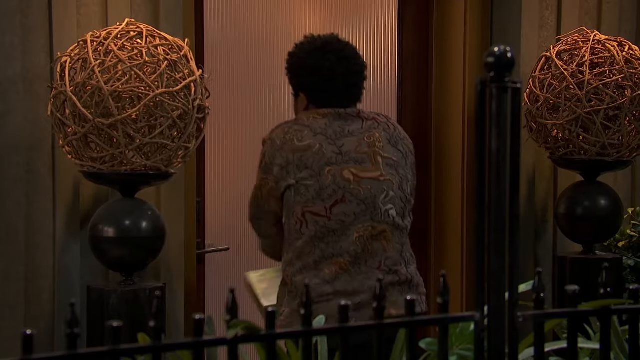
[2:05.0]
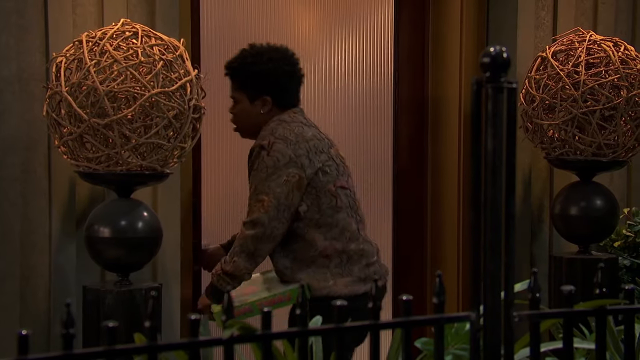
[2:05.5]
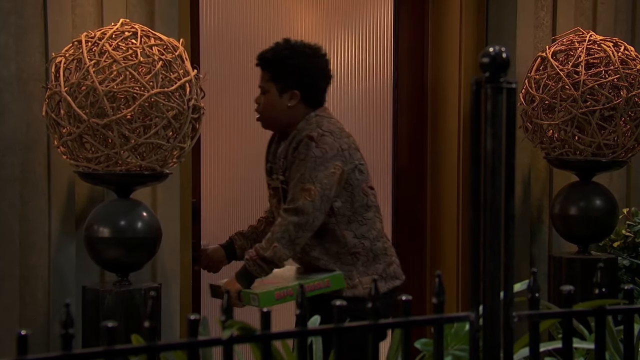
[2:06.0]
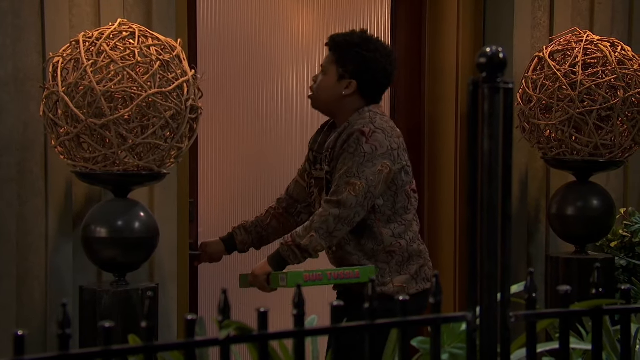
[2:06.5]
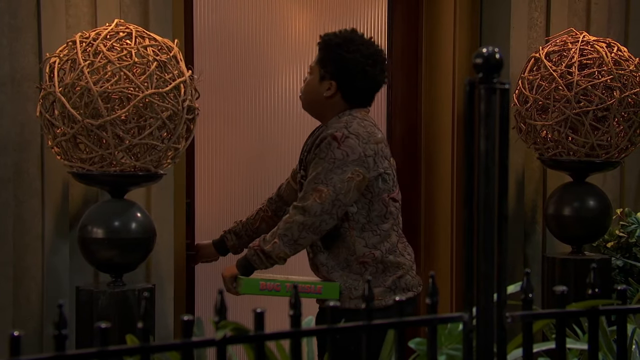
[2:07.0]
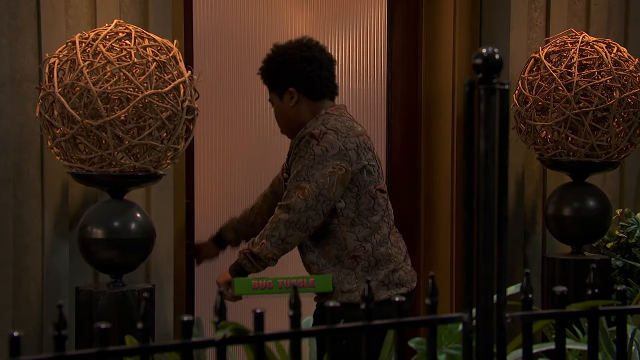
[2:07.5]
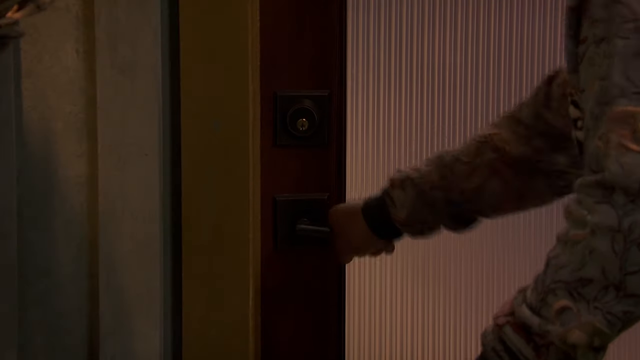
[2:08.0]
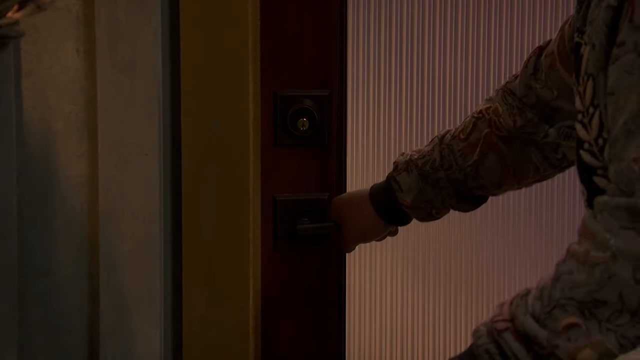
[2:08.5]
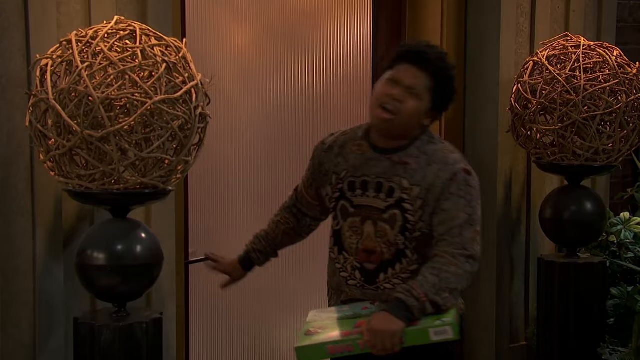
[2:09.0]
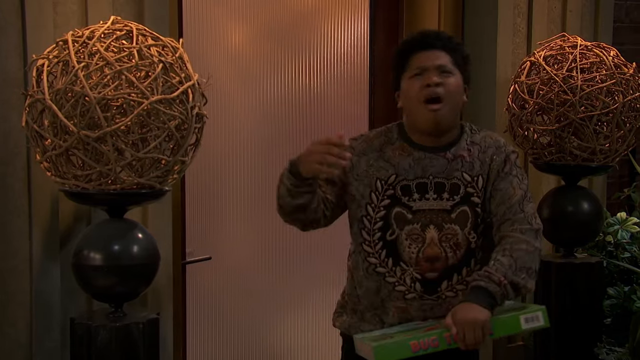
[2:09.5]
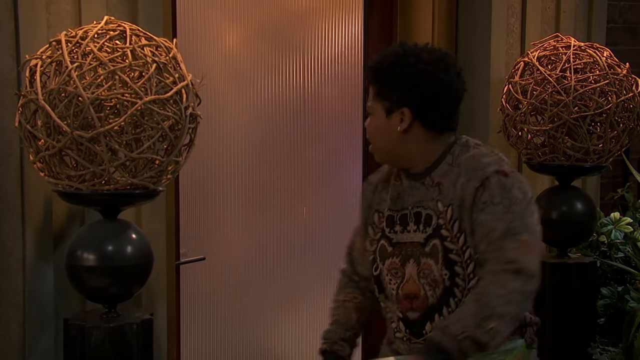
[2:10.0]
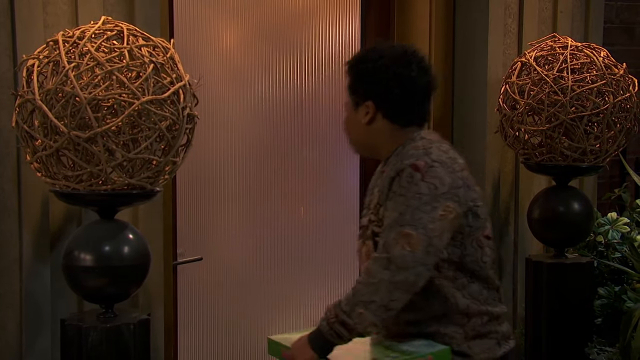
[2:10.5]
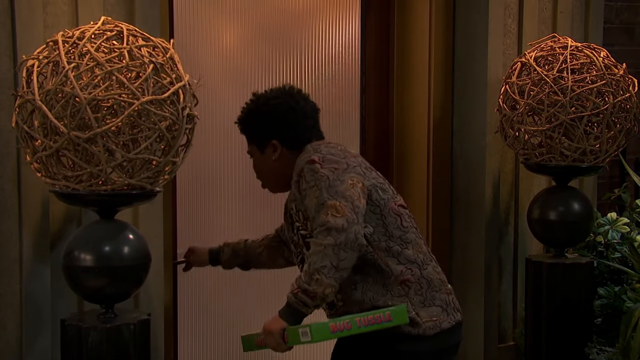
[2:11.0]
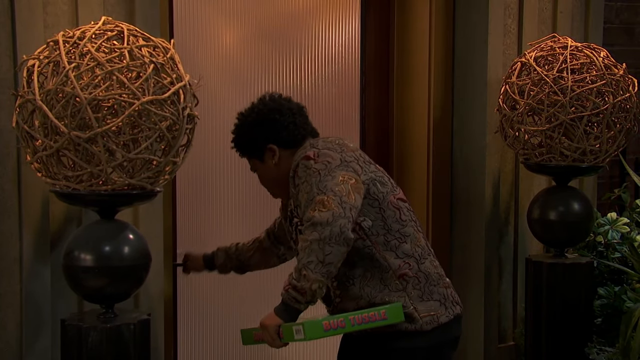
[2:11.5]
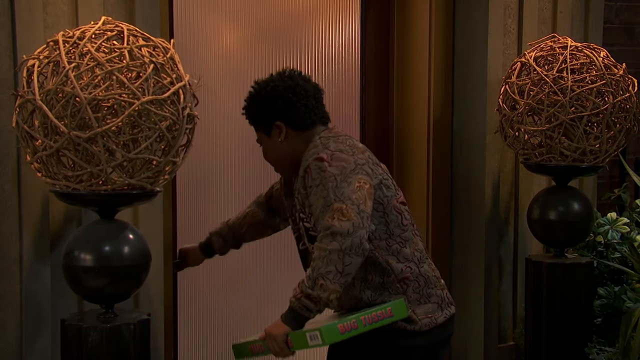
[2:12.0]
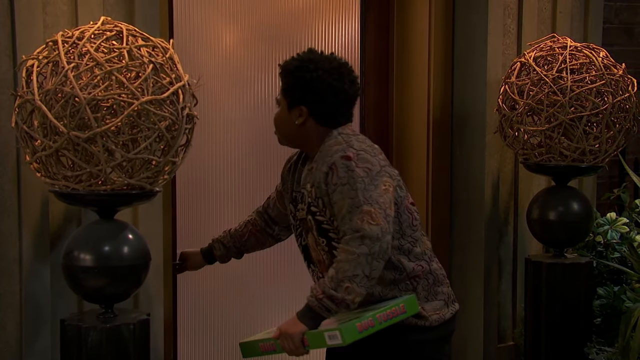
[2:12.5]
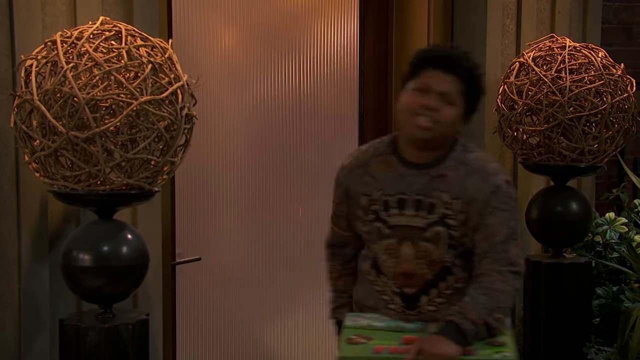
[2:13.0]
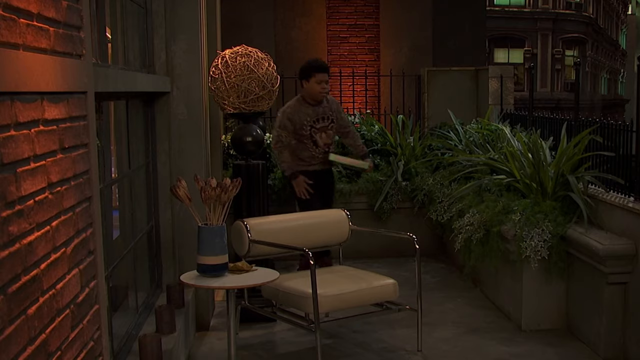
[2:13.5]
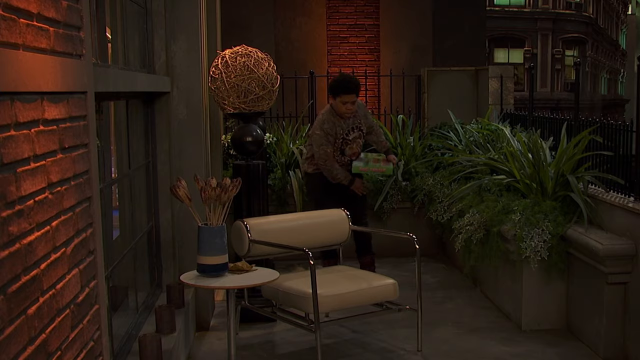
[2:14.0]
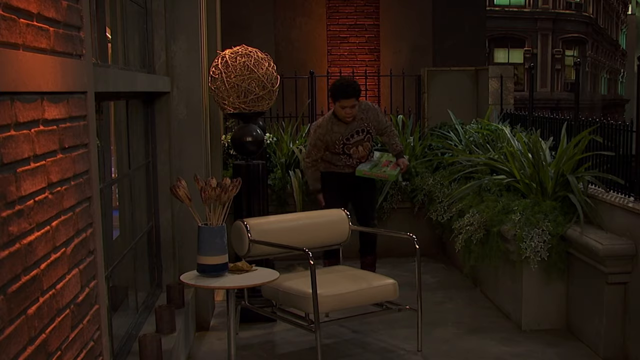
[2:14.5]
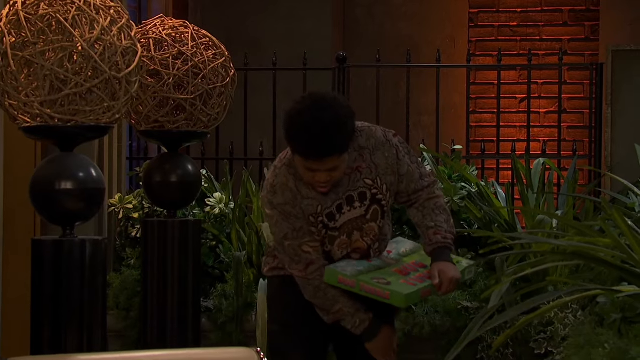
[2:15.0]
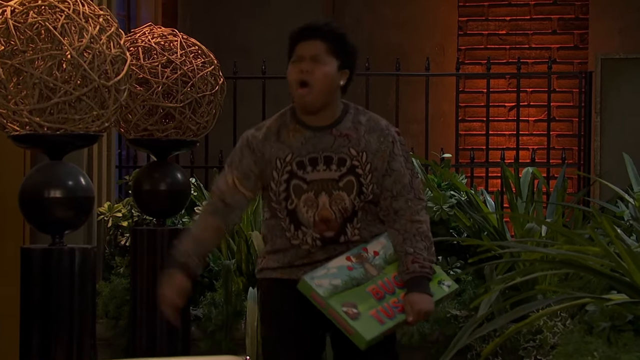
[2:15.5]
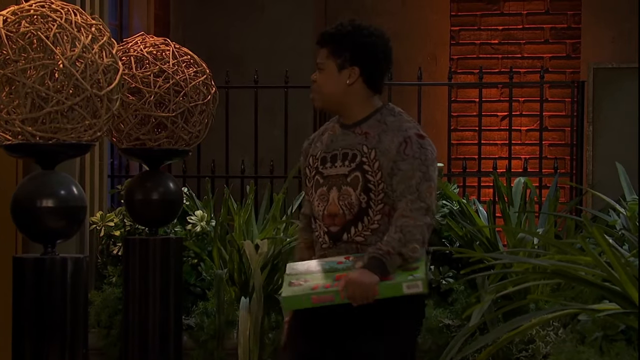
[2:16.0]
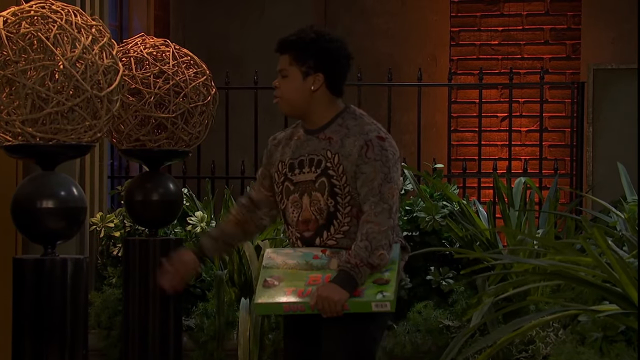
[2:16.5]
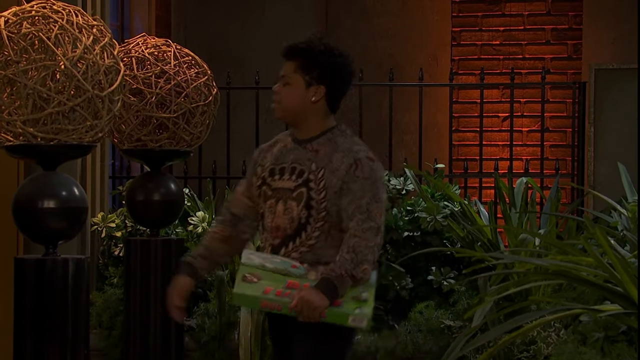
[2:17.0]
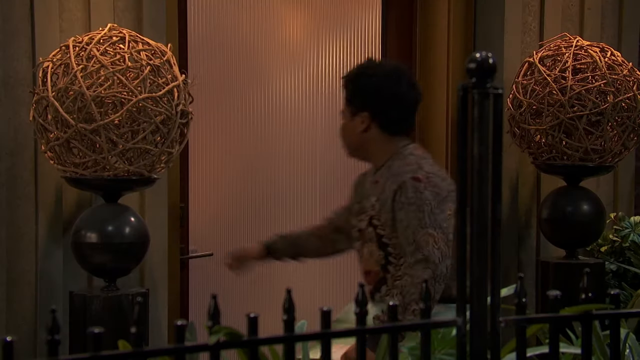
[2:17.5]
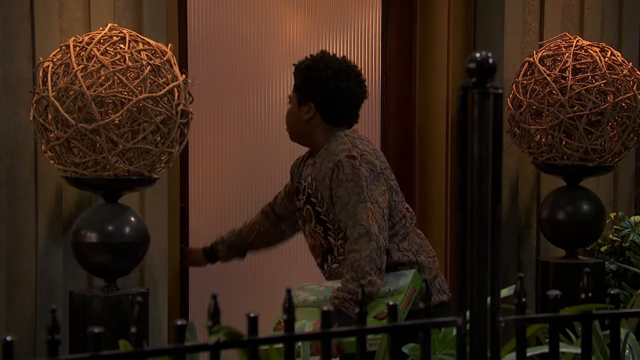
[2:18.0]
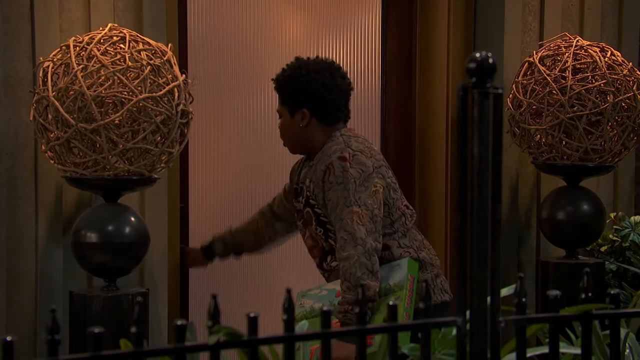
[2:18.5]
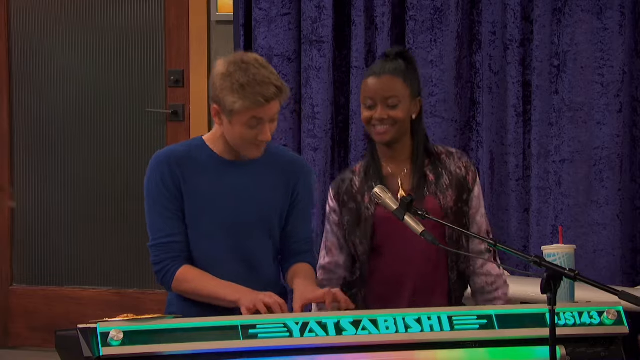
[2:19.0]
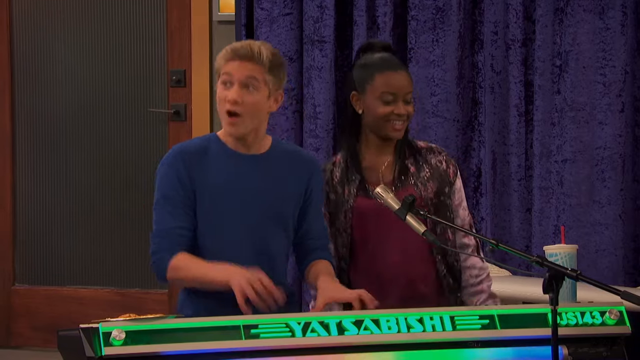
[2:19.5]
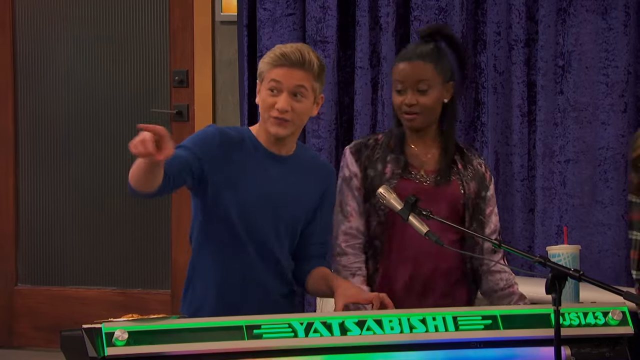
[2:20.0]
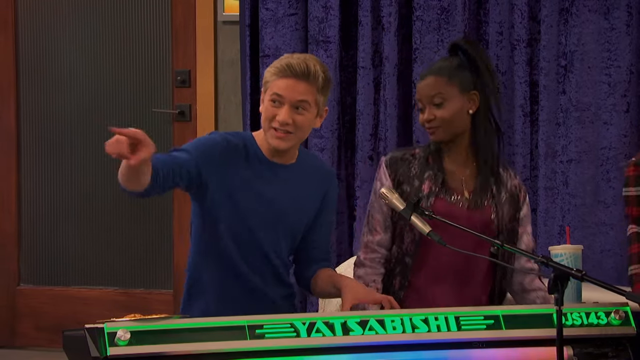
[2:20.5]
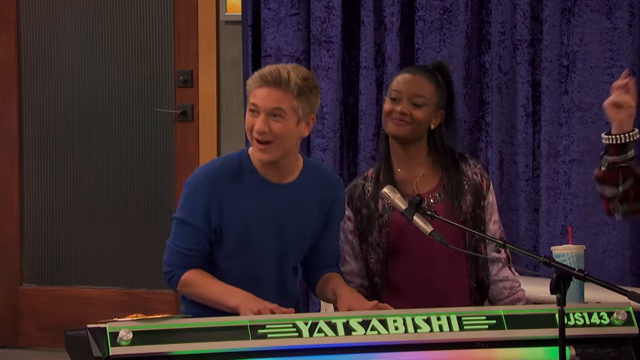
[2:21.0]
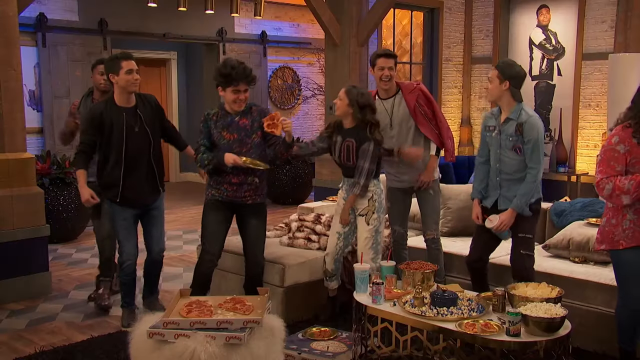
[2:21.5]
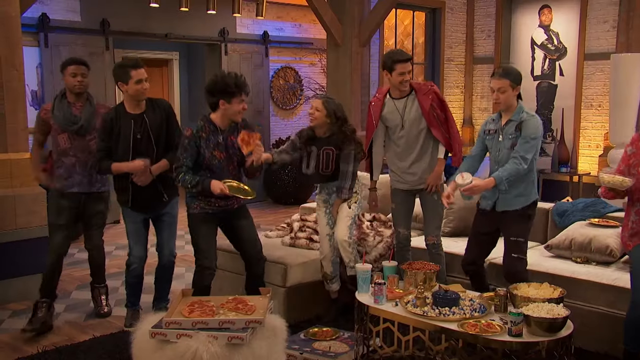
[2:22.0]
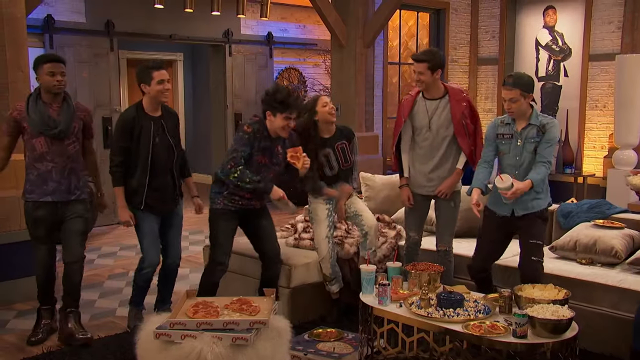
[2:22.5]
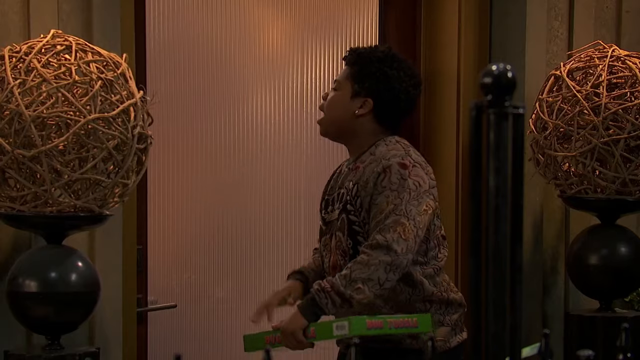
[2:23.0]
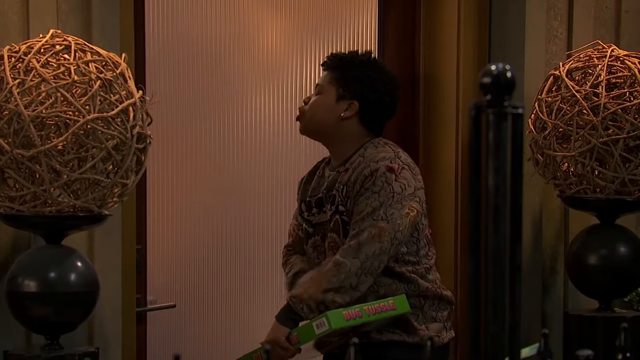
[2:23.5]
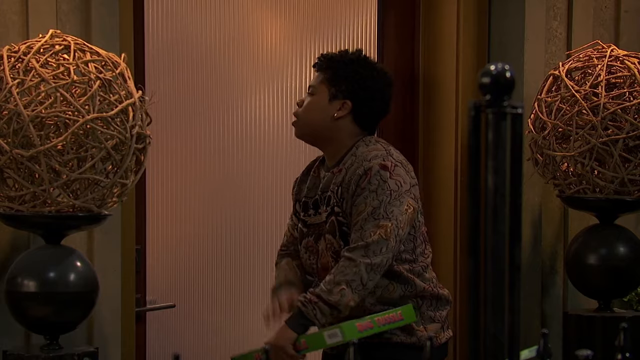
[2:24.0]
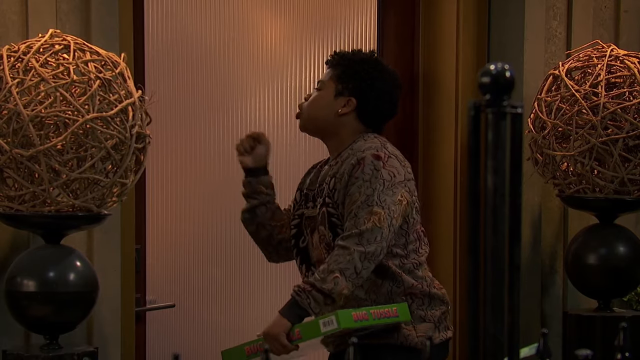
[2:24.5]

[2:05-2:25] The young teenager appears to be outside, still holding the board game. He attempts to re-enter the room where the party is, but the door appears to be locked, keeping him out. Inside, everyone is dancing and enjoying their time while the individuals playing music continue to entertain the guests. The teen stuck outside is unable to join in and shows his frustration at not being able to get warm.